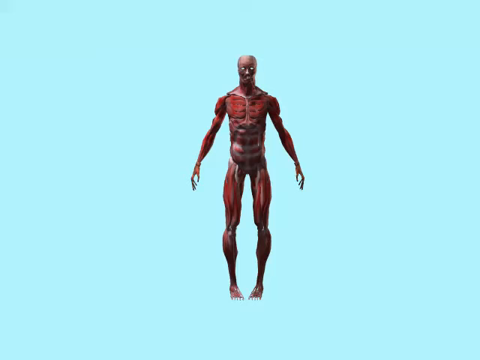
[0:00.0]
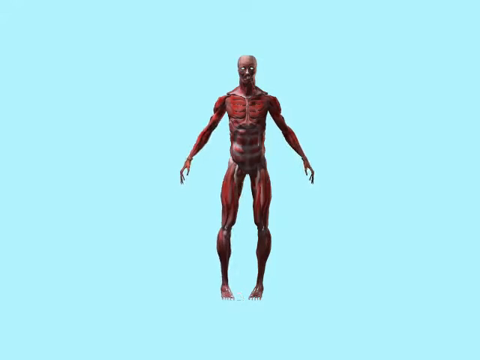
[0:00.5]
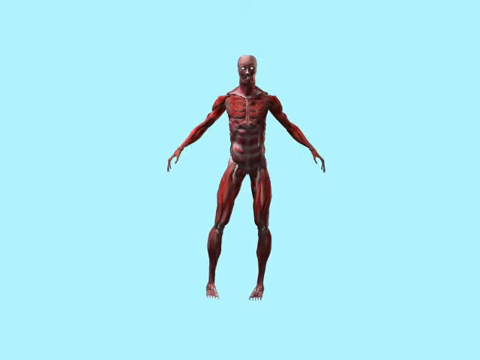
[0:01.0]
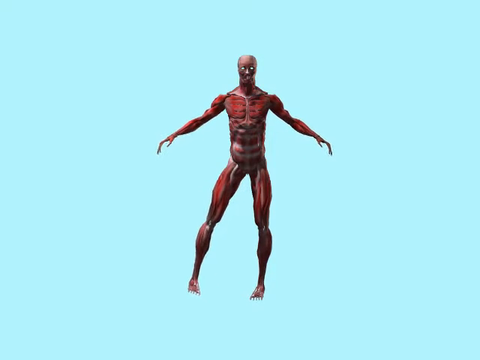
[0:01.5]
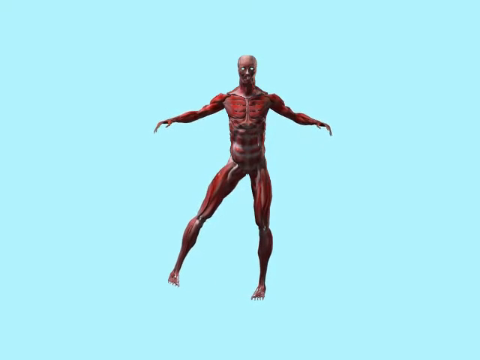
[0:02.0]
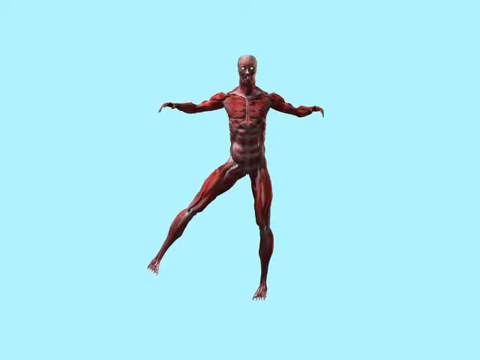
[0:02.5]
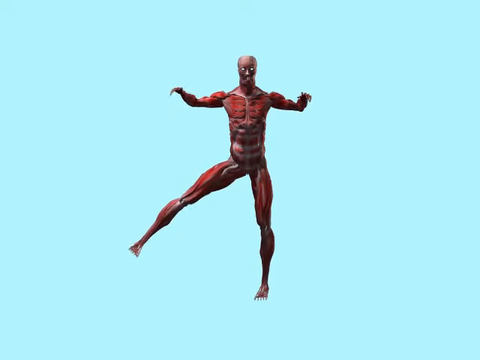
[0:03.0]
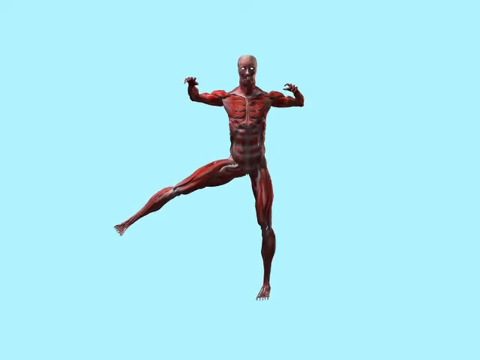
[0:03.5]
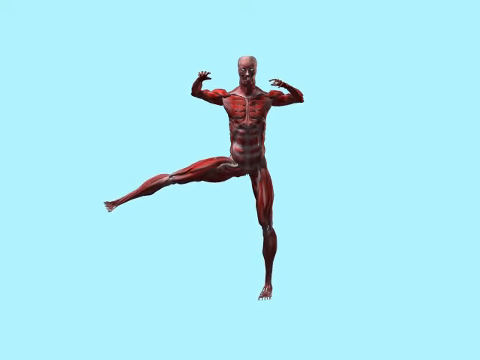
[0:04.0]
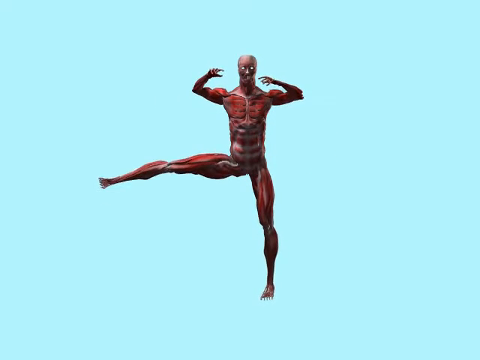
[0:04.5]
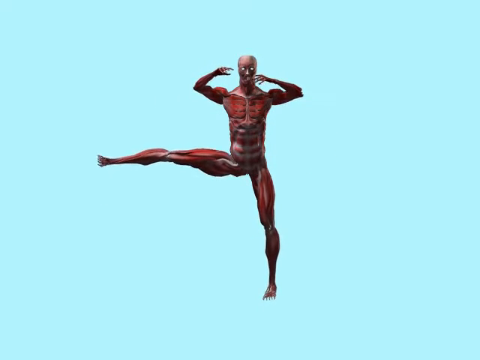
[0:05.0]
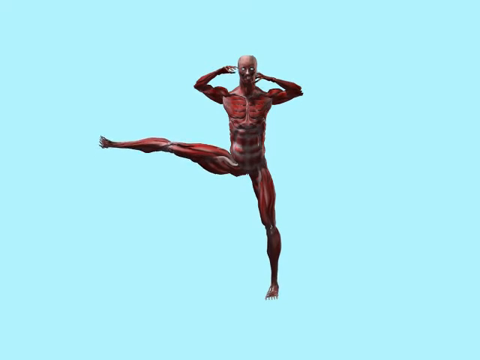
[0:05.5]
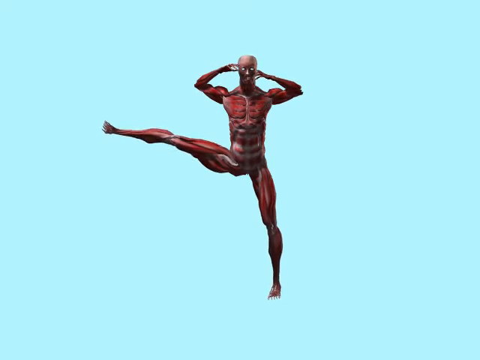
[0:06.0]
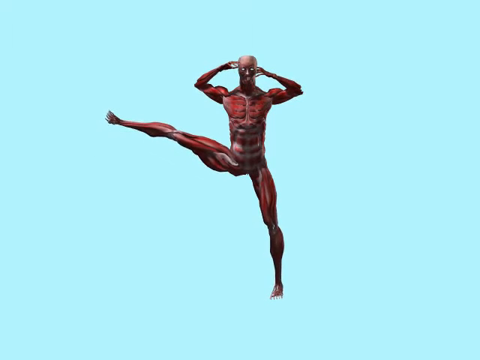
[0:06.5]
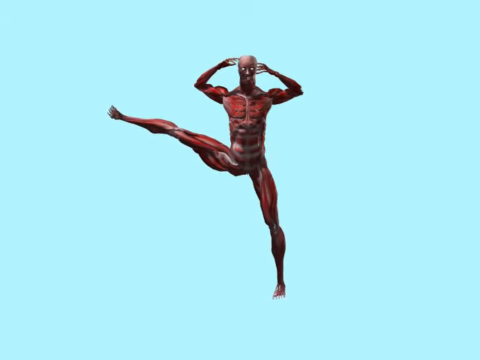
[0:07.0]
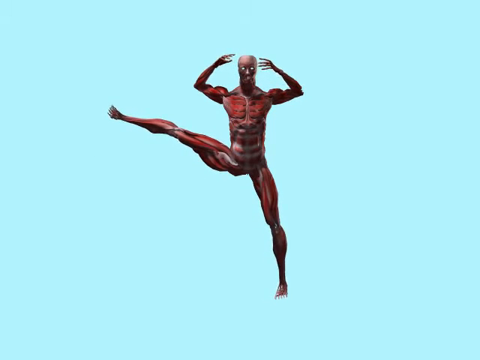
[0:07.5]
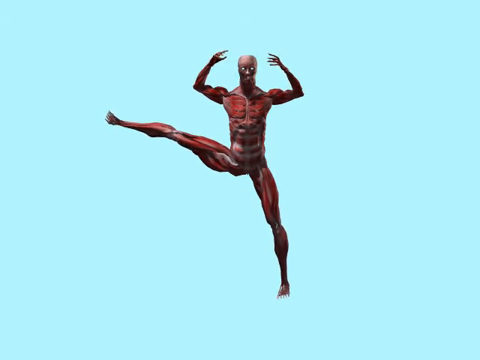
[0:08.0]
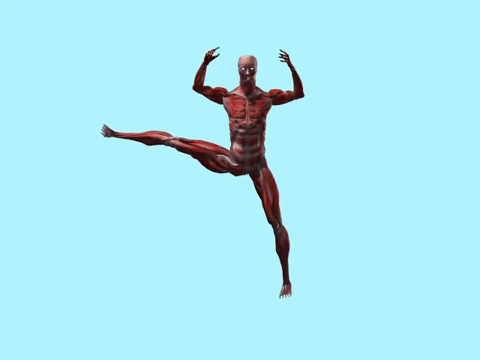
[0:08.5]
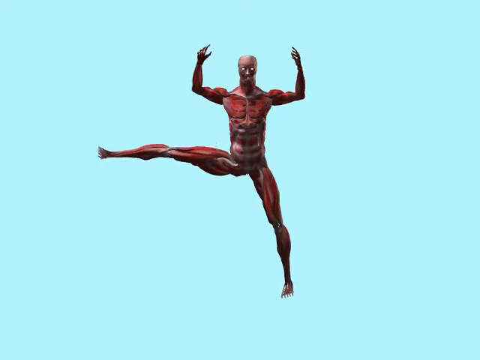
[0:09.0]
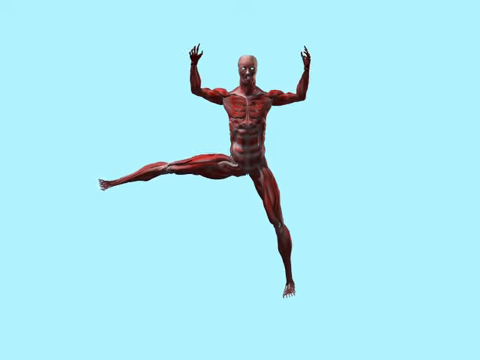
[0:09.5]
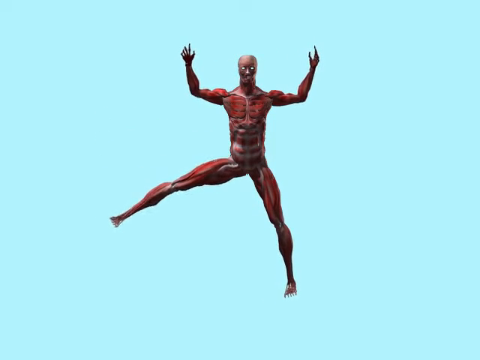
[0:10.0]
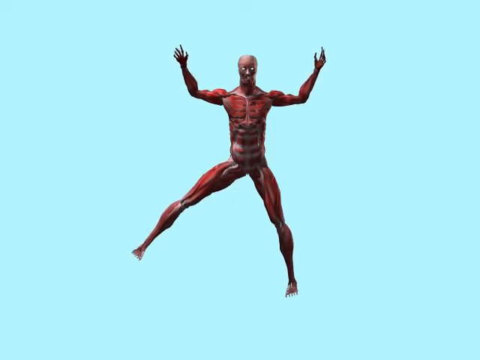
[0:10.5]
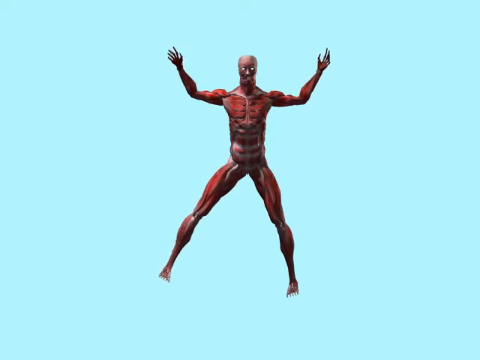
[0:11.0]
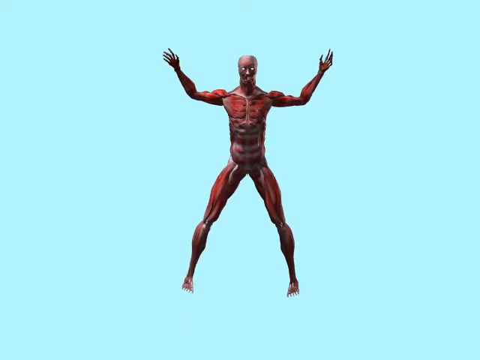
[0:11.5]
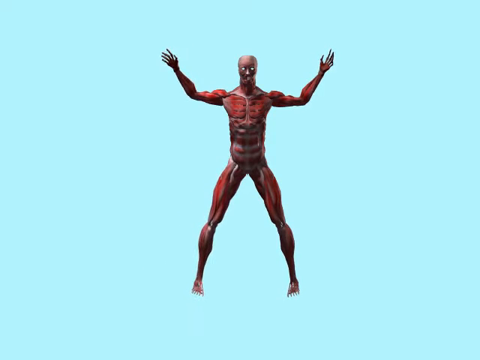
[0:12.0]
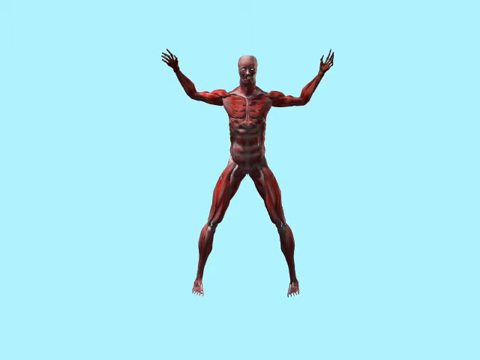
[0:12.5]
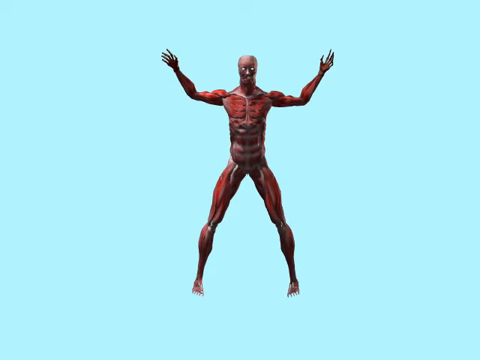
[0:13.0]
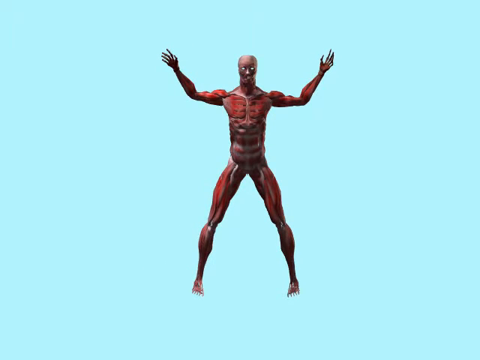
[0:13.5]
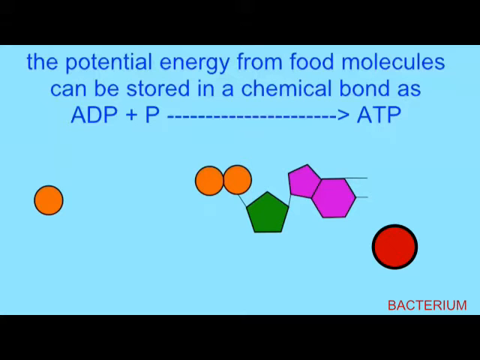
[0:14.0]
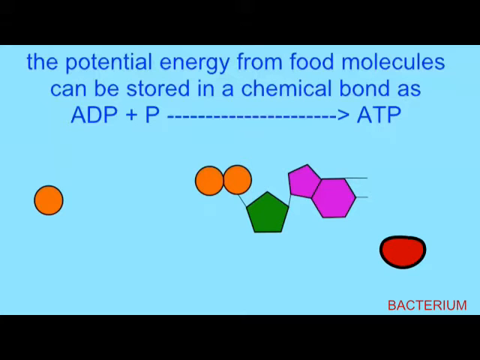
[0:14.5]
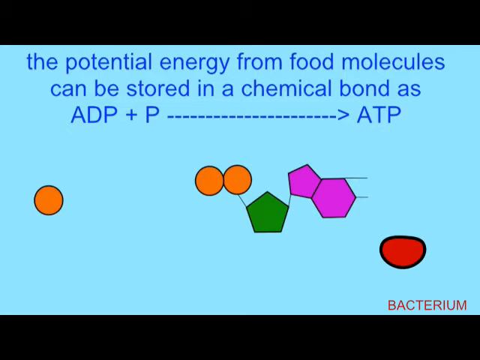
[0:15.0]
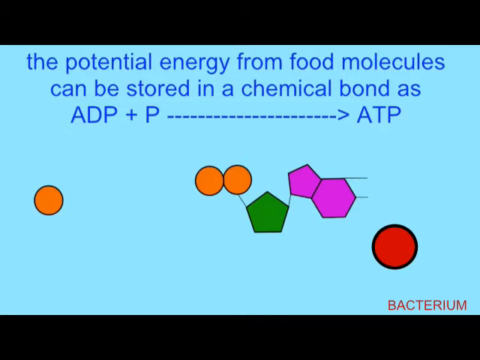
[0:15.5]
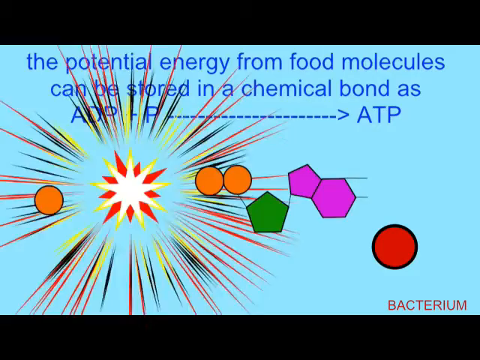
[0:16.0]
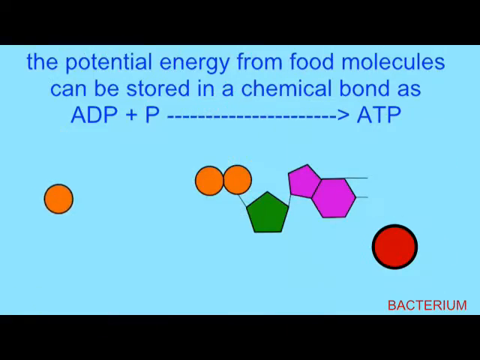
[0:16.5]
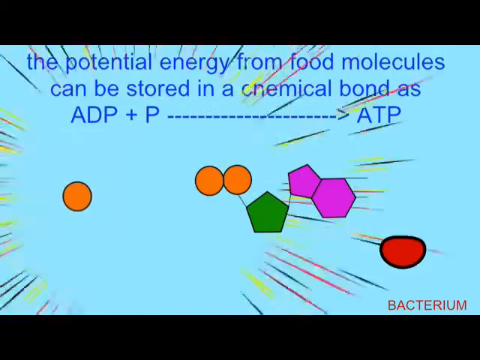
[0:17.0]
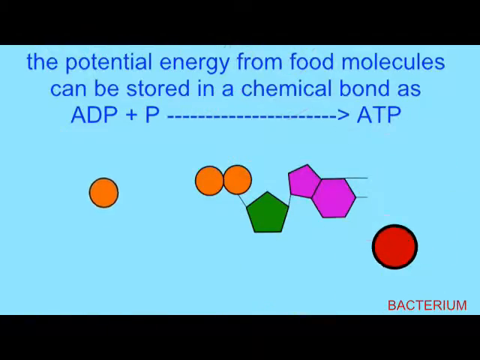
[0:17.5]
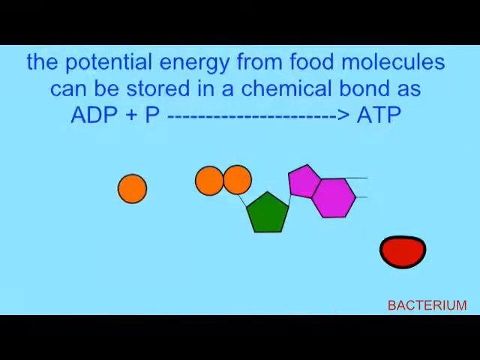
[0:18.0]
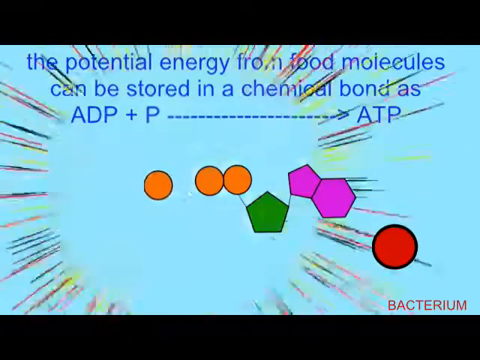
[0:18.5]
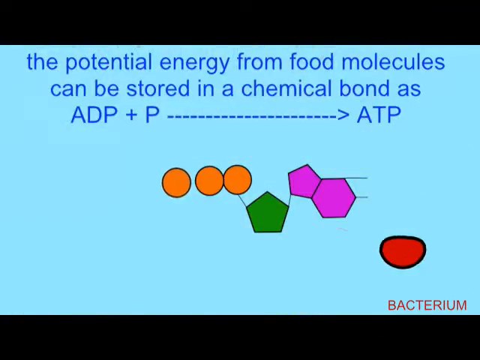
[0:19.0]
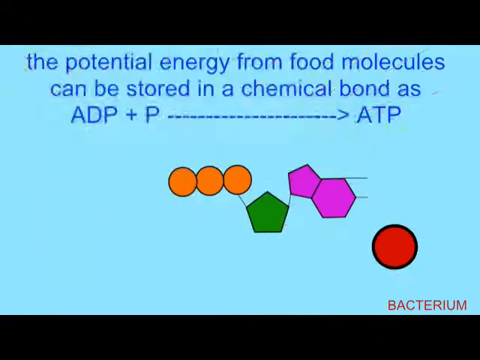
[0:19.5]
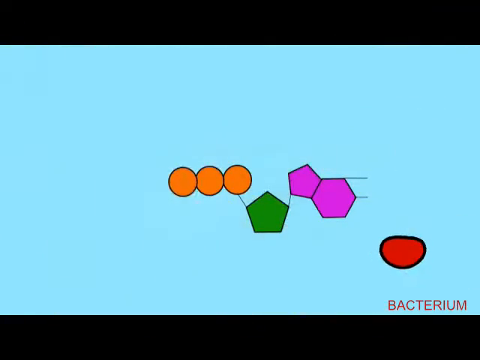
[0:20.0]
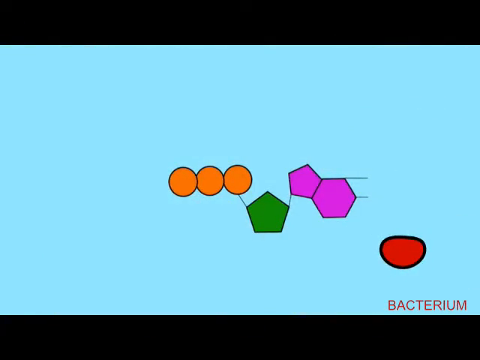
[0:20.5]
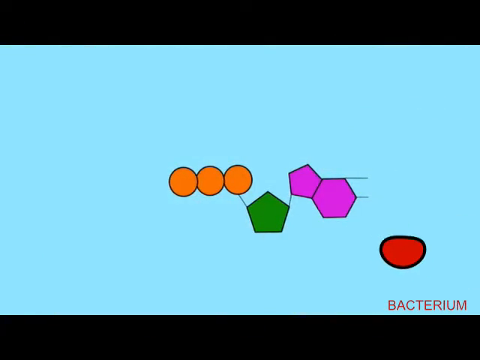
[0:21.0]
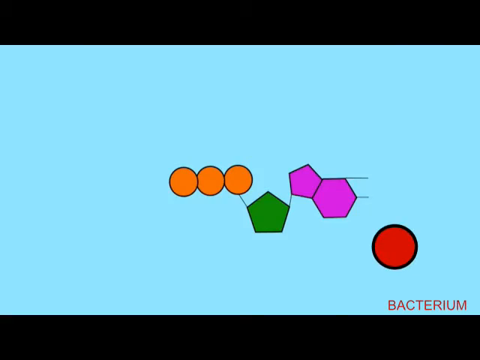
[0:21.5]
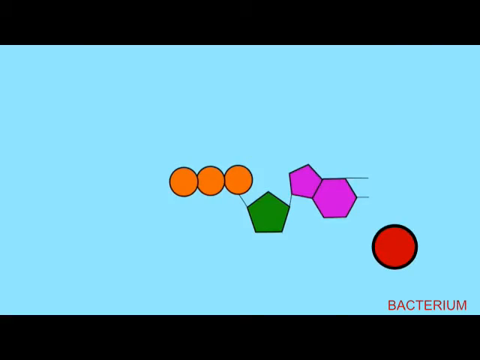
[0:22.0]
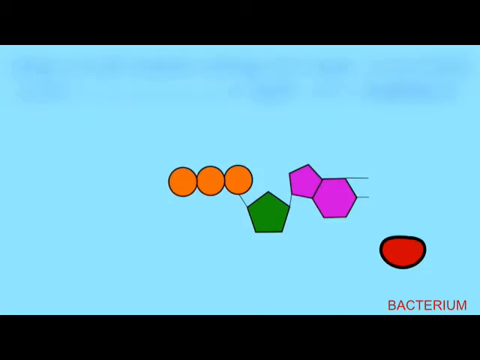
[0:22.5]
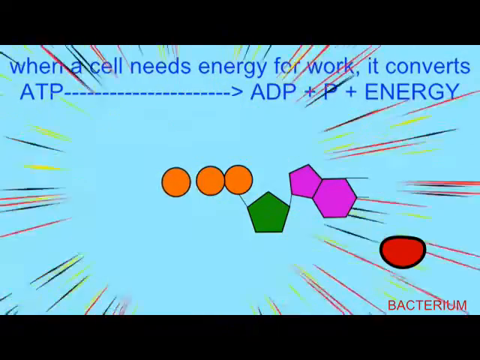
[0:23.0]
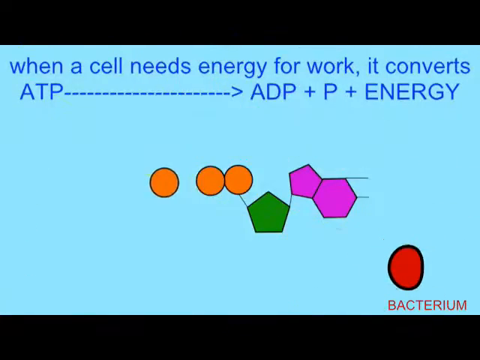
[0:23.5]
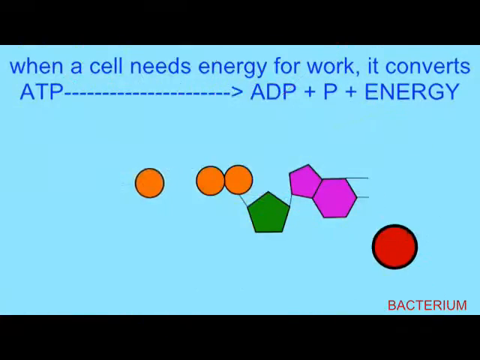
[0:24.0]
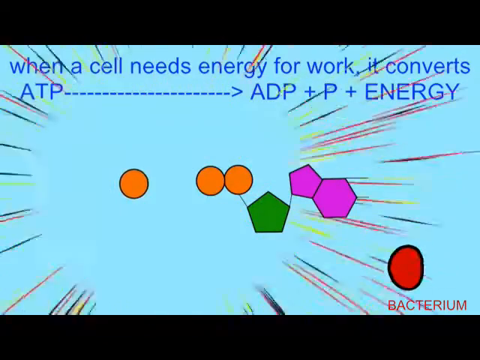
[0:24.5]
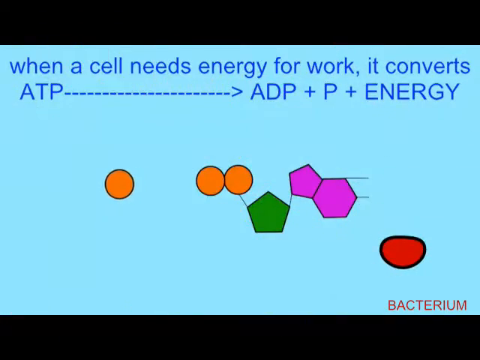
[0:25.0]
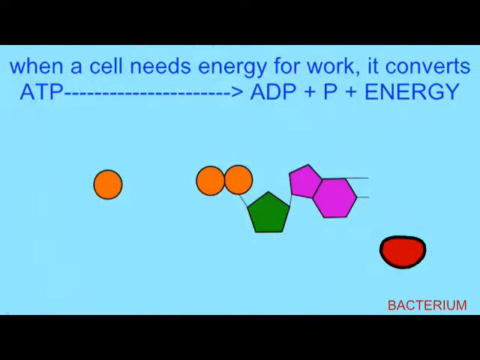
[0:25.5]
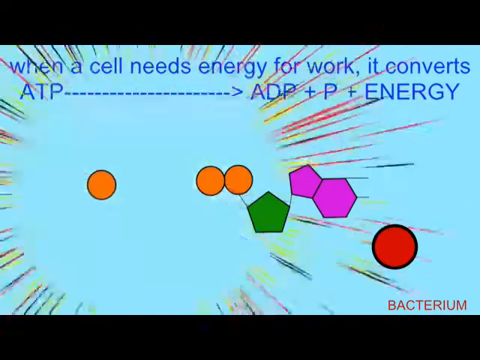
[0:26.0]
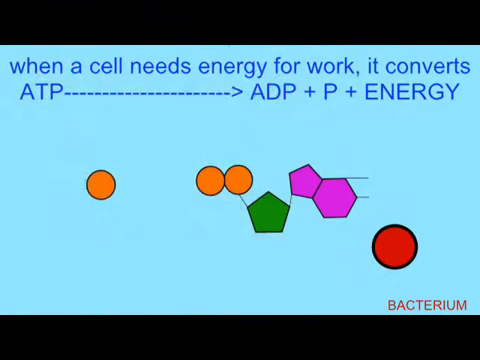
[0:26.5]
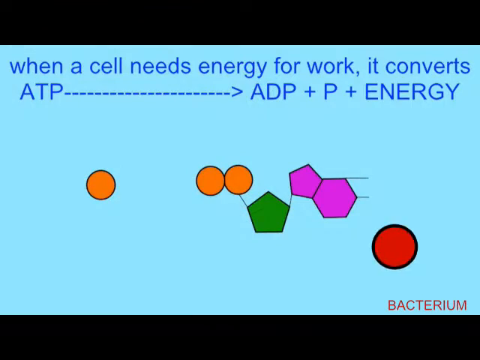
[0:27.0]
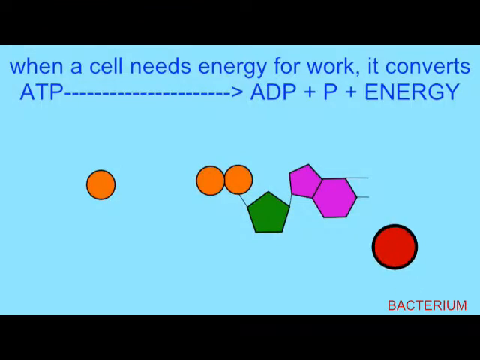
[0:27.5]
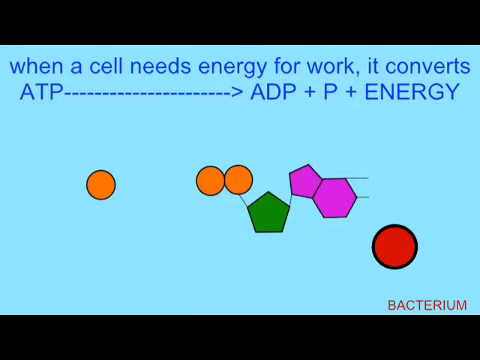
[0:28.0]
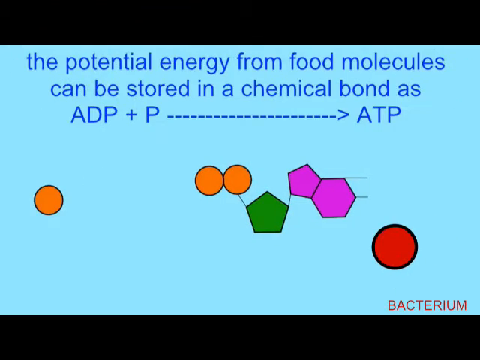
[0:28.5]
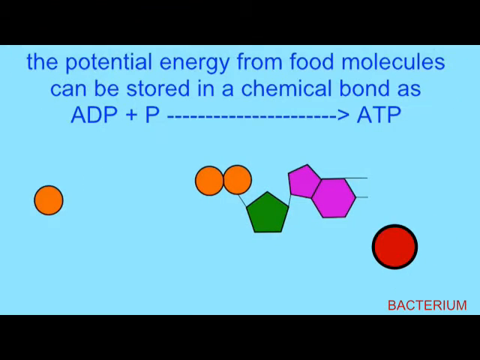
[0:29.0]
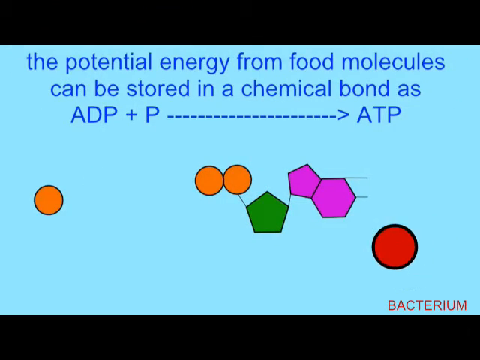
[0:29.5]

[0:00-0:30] A light blue background fills the center of the frame, leaving about two inches at the top and bottom. On it is a body with no skin and no hair, its muscles visible across the chest, stomach, thighs, calves and the whole body; the eyes are hollow and white-looking. The arms start down with fingers pointing down and palms toward the thighs, then slowly rise as the left leg goes out. With the arms at shoulder level, the left leg is brought completely straight out to the side. The hands come up to the face as the leg keeps rising until the foot is about at chest level, held straight out. The hands then go up past the face, palms toward the face, out about shoulder width, as the leg starts lowering and the arms extend out. The leg returns to its earlier, slightly spread position, the arms are out with the elbows at shoulder level, and the body bends at the elbows, stretching up to the right and up to the left. The video then cuts to an all-white background. Across the top, dark blue text reads "the potential energy for food molecules can be stored in a chemical bond as ADP plus P", followed by a long blue arrow labeled "ATP". On the left is a little orange circle, and in the middle are two orange circles touching. A little line runs down from them to a green shape that looks like the outline of a house. Up from it is a purple shape that also looks like the outside of a house, then a six-sided purple shape, and down from that a red circle. The red circle kind of blinks and moves up as the orange circle moves toward the other orange ones, with a comic-book "Kapow" type of burst. The orange one goes back over to the left side, still with the comic-book Kapow design: white in the center with a red border and sharp, jagged edges poking out.